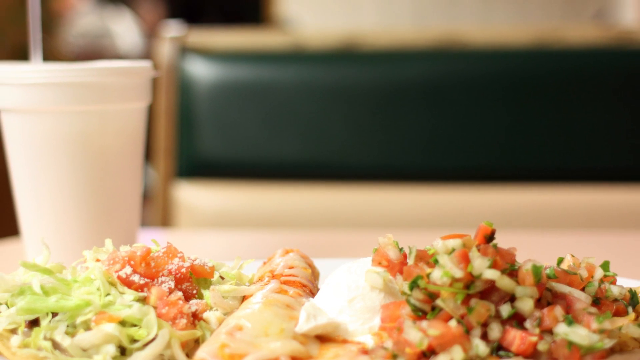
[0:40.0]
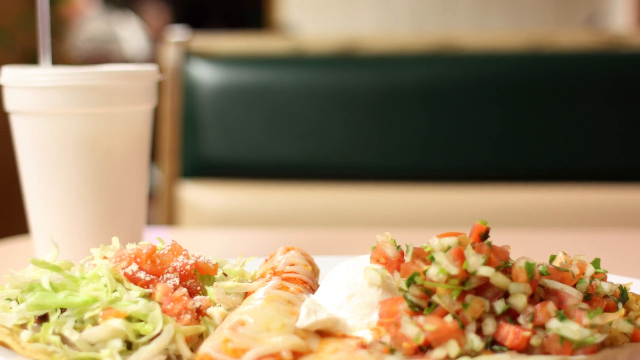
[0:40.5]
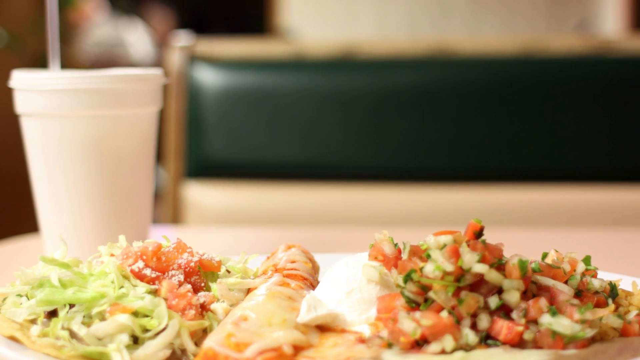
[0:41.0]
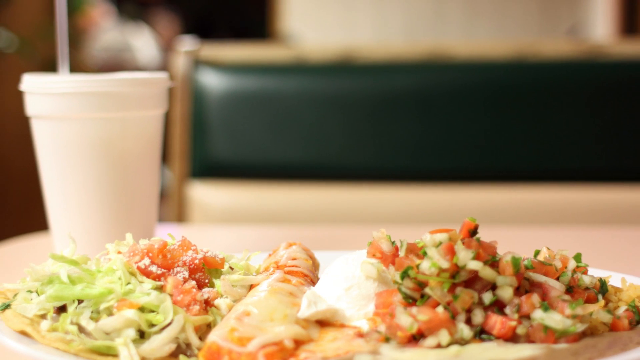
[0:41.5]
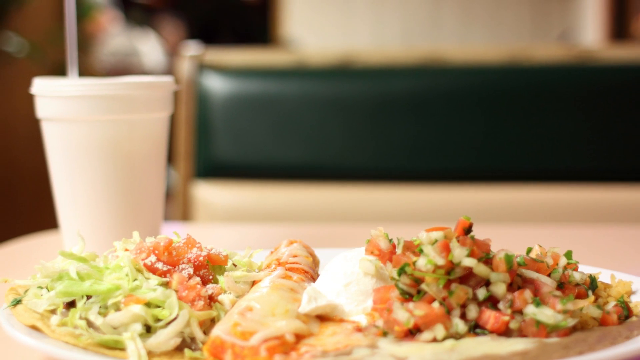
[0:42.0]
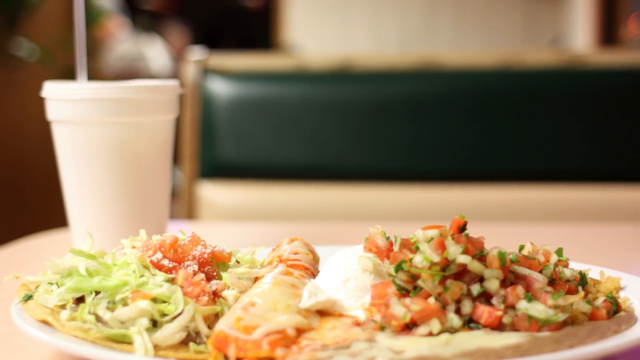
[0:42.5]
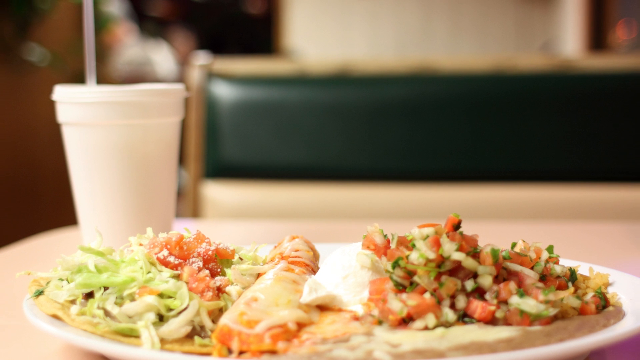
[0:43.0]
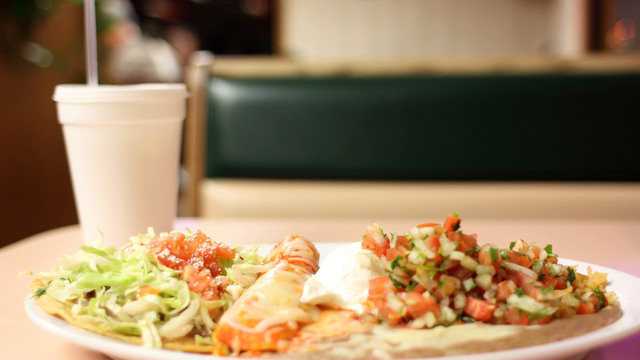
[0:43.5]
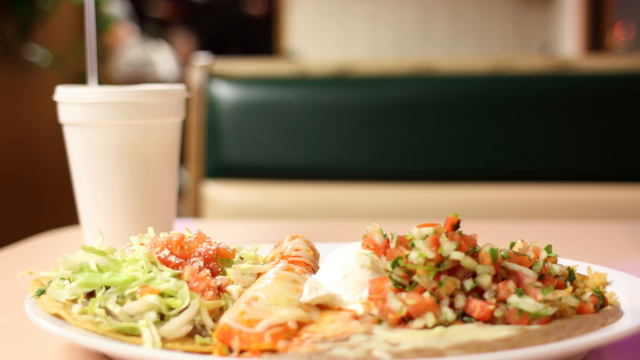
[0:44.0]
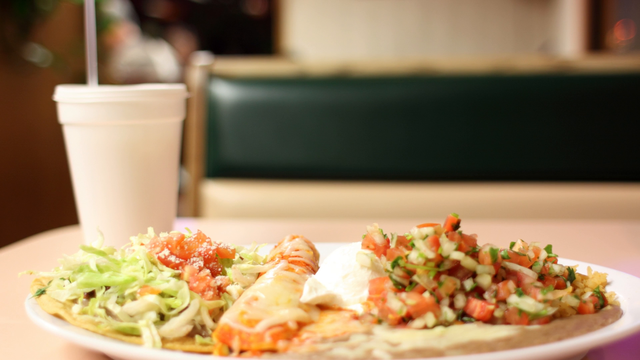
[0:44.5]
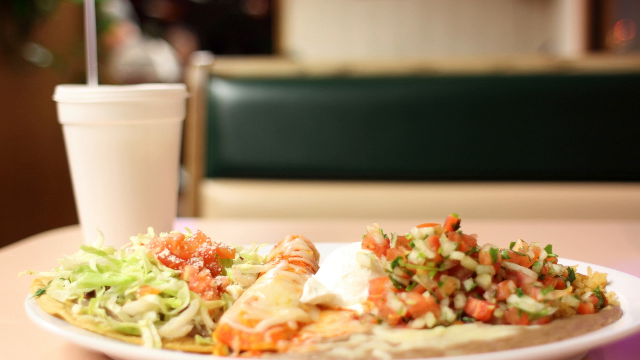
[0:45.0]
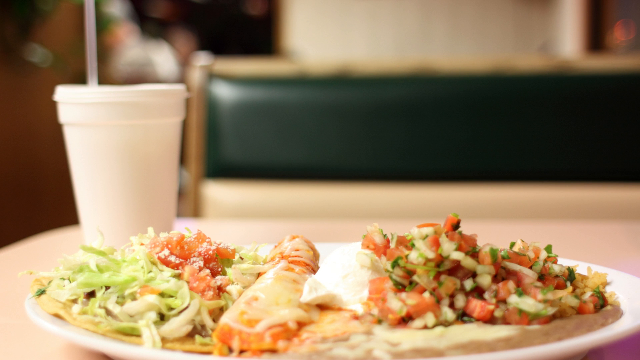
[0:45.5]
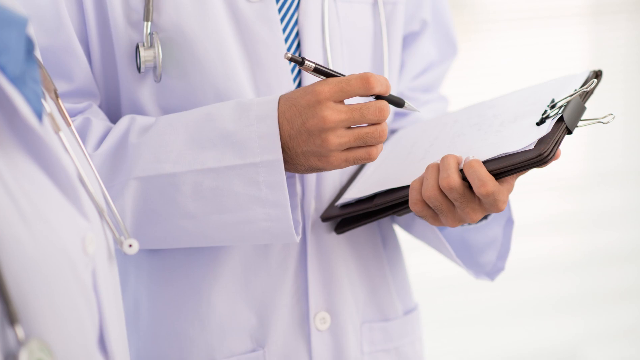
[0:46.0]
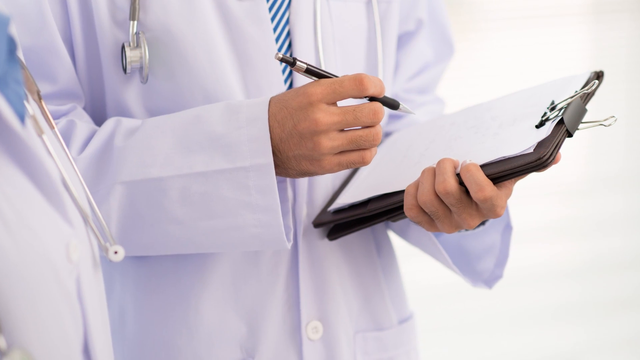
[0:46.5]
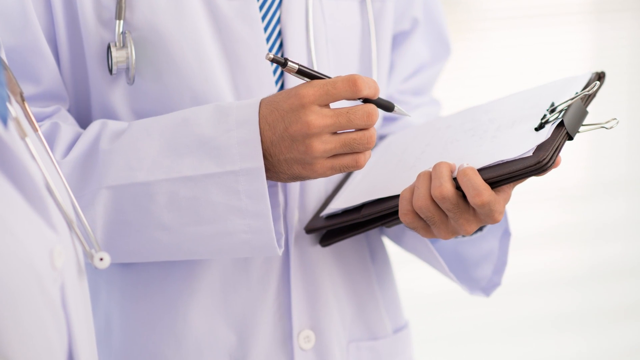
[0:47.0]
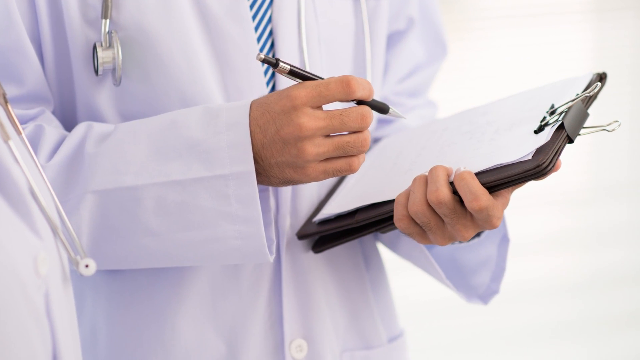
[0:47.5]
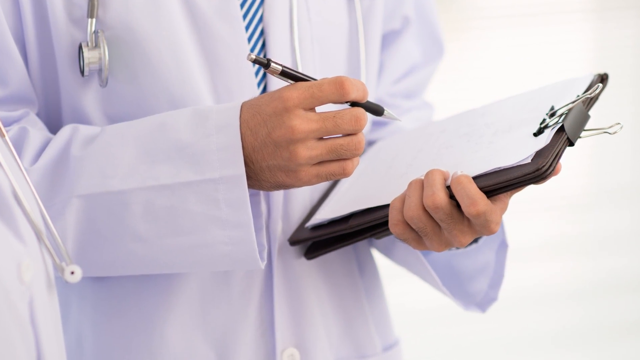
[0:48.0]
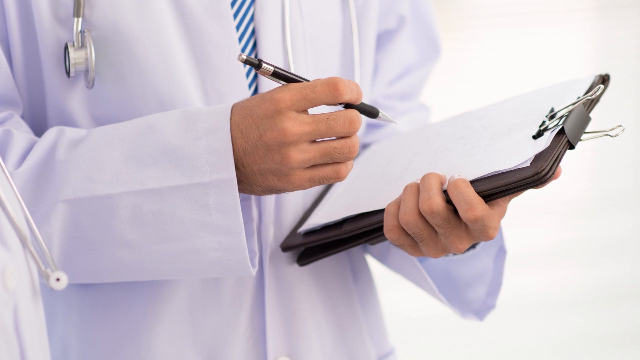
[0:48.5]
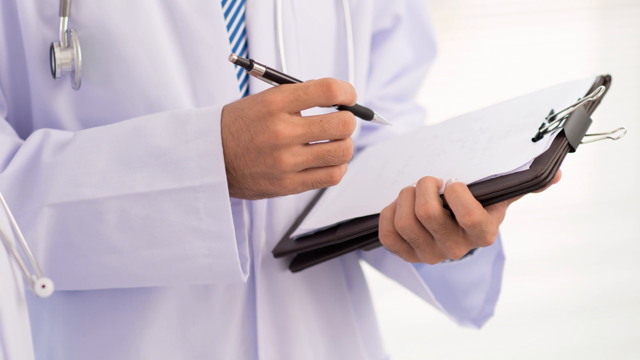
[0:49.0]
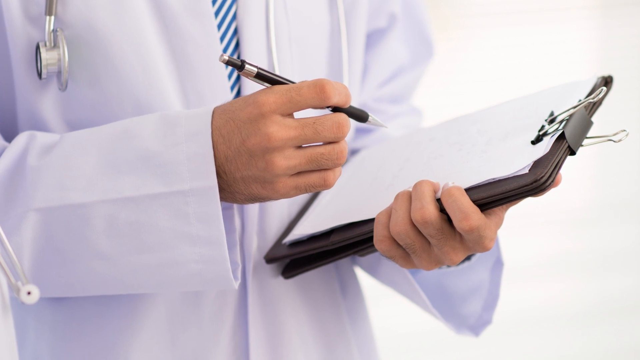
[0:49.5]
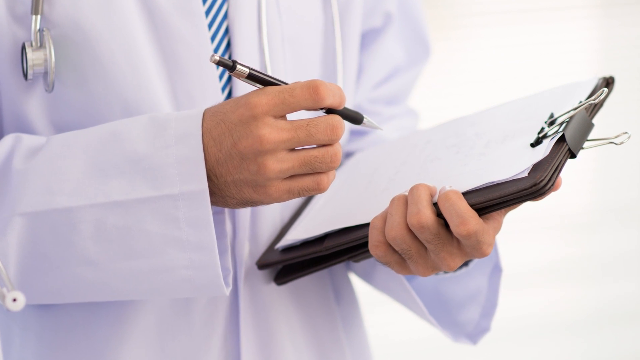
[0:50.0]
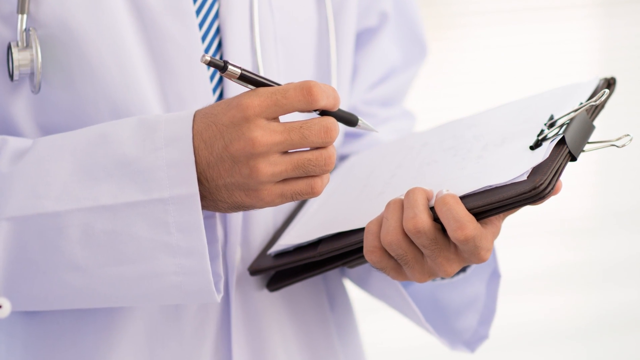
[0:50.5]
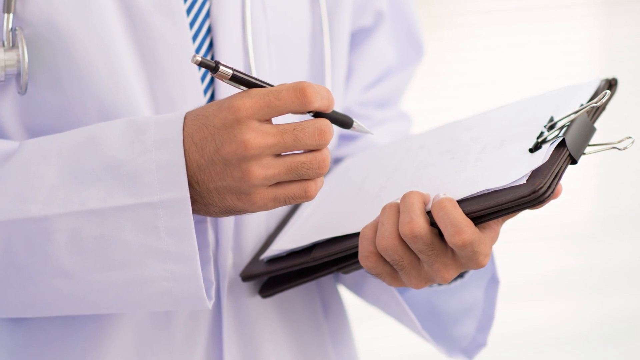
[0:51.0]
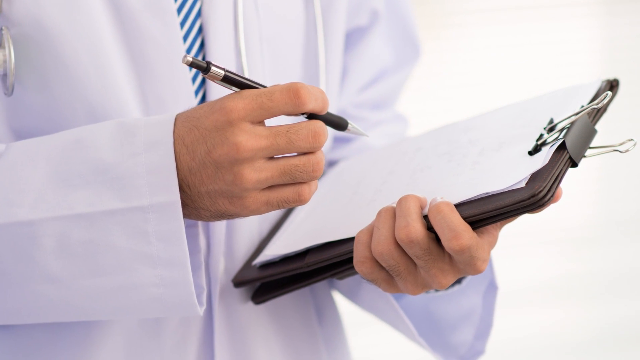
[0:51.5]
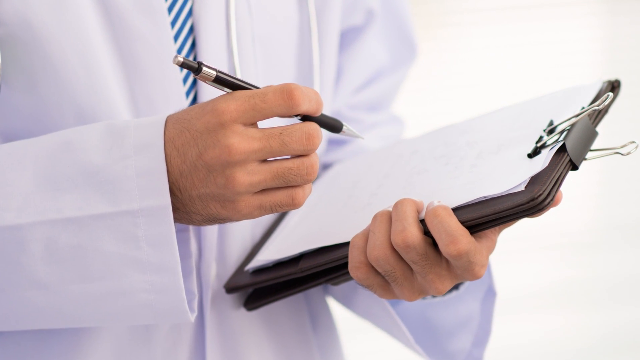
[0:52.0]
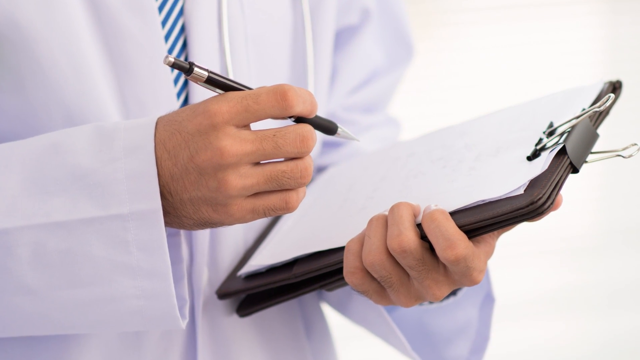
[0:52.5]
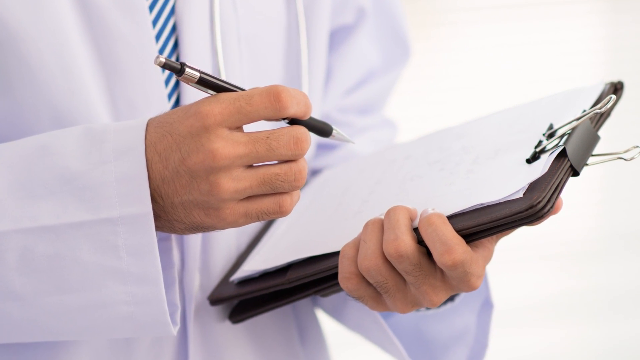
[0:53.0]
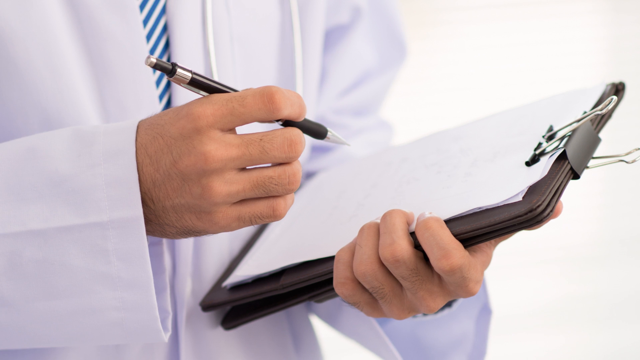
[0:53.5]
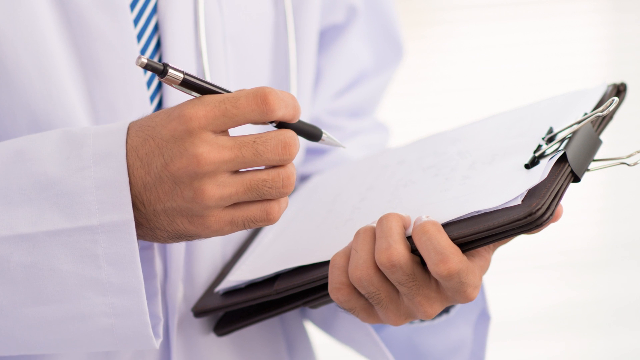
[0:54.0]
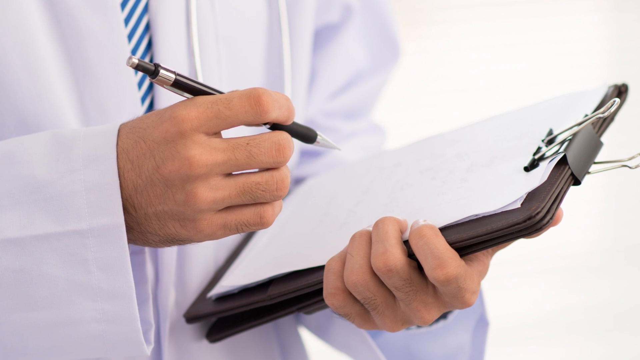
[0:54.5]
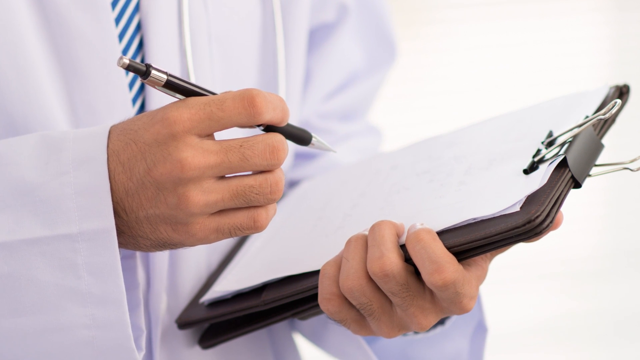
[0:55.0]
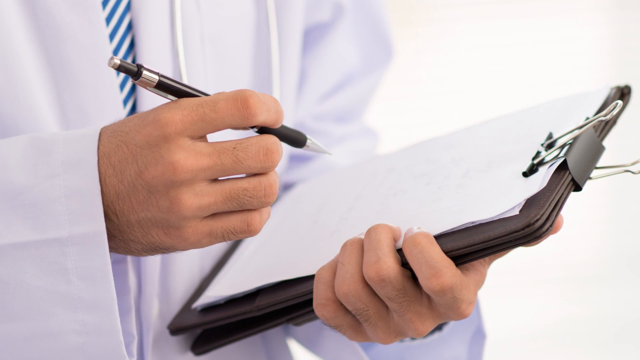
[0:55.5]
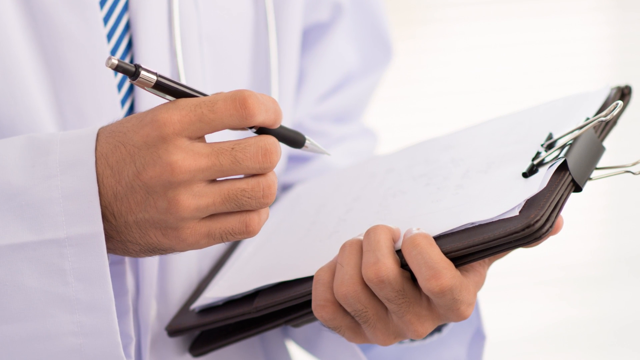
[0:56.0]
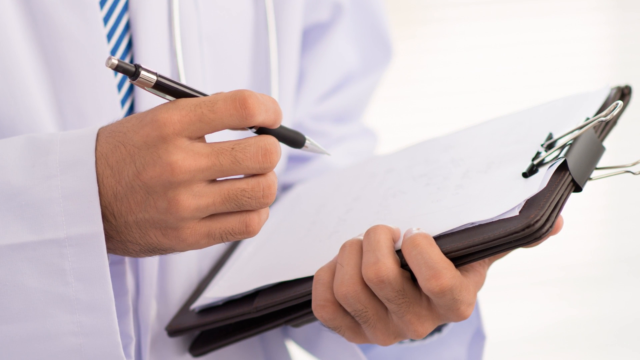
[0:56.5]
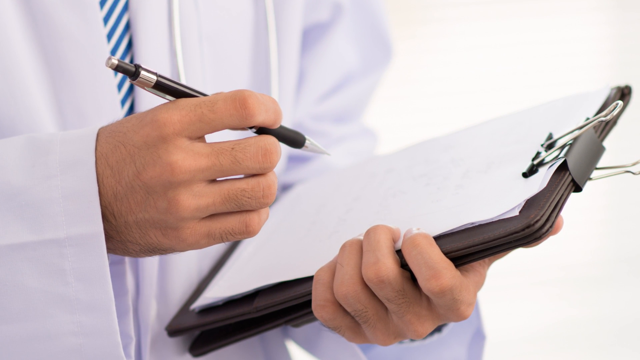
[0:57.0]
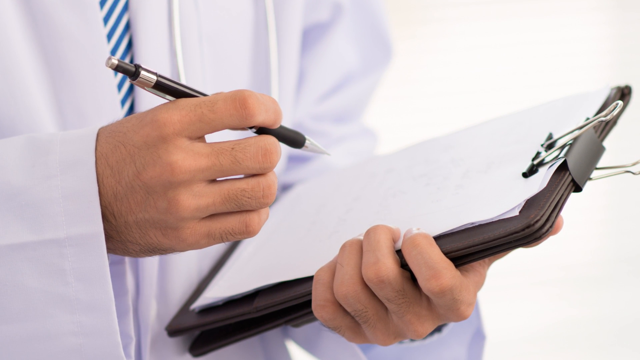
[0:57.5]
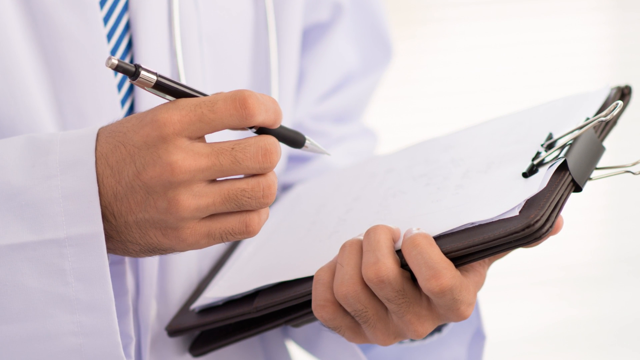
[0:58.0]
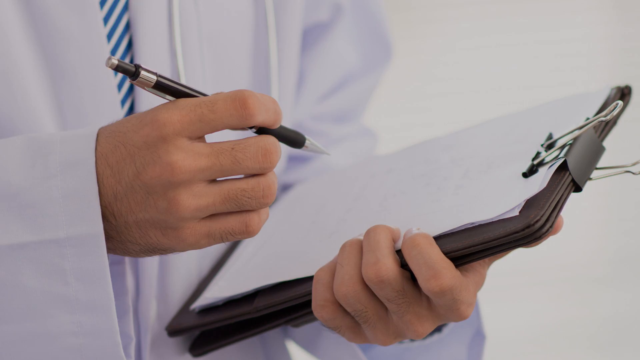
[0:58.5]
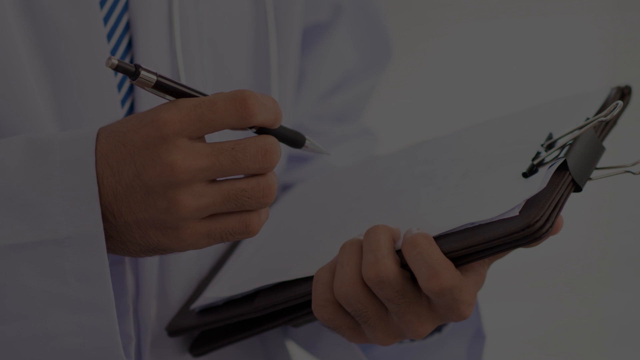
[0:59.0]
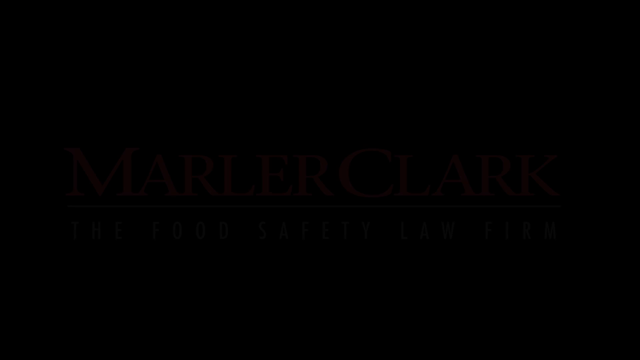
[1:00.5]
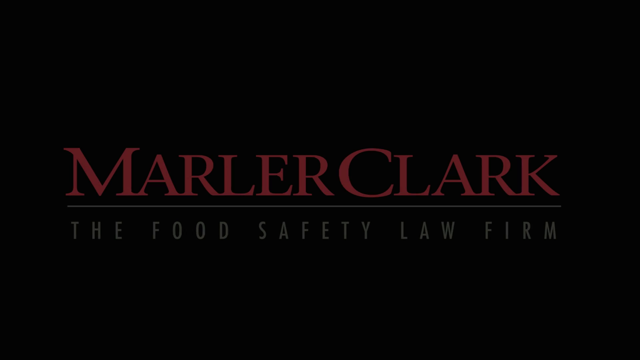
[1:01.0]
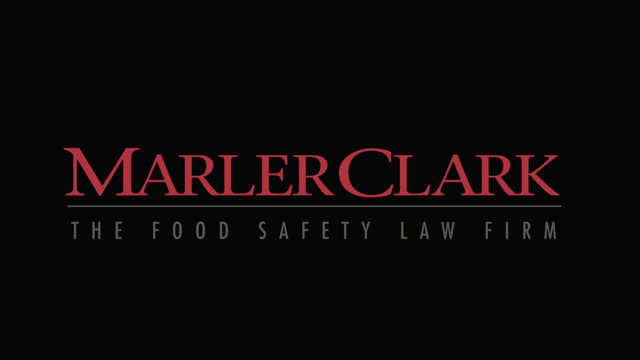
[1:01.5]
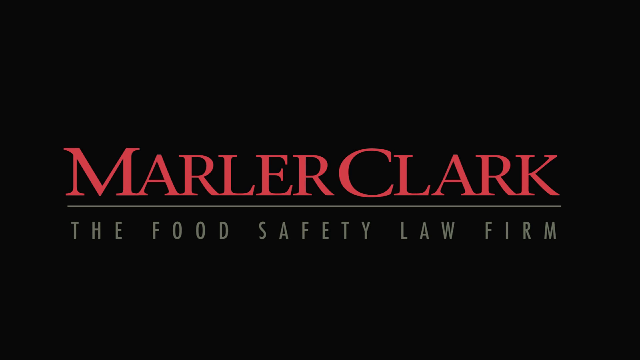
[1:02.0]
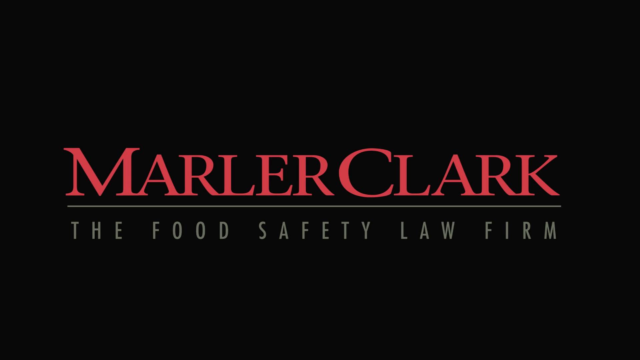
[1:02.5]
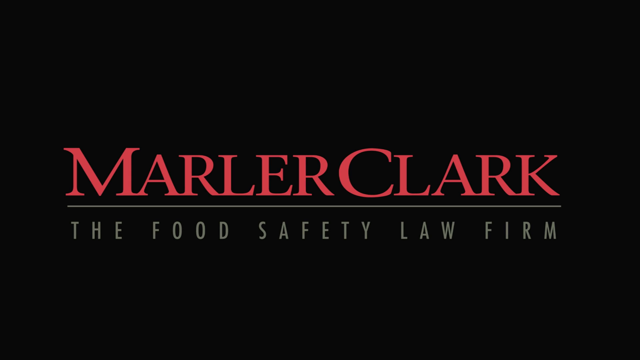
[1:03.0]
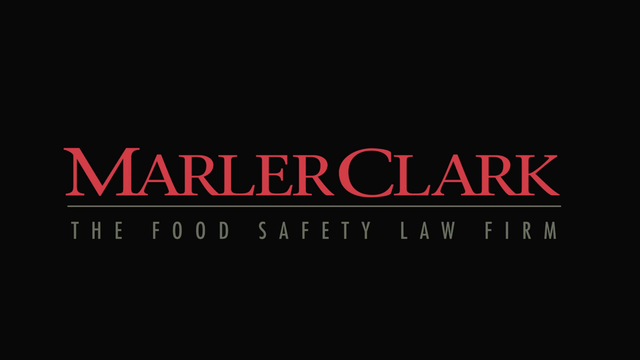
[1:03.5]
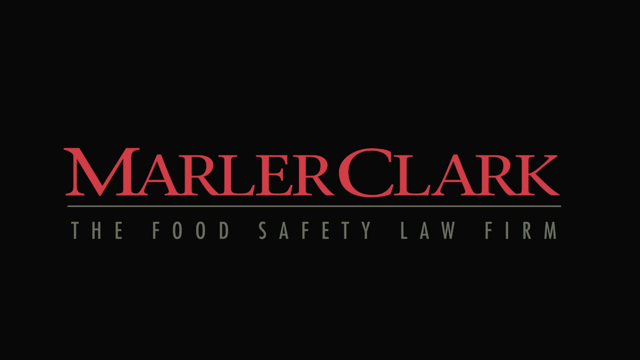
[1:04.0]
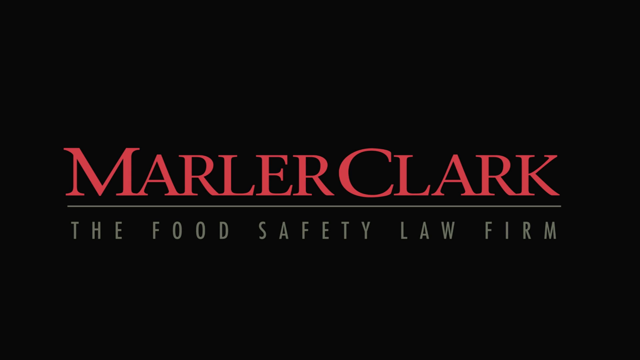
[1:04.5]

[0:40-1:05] An image shows some food served on a white plate in a restaurant; it seems to be a salad with various cut vegetables mixed on the plate. A white cup is to the left of the plate, slightly unfocused, as is the photo's background, and the image slowly zooms out. Then a photo of a doctor appears, with only part of his chest visible while his face and legs remain out of the frame. He wears a stethoscope and a white coat, and holds a pen in one hand, noting something down in a black note holder that he holds in his other hand. The image slowly zooms in on the note holder. After a while the screen fades to black and shows a red caption, "Marler Clark", with the words "the food safety law firm" below it, all in uppercase, in a light grey font.